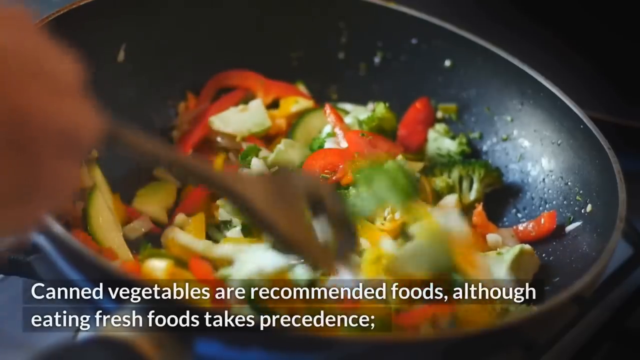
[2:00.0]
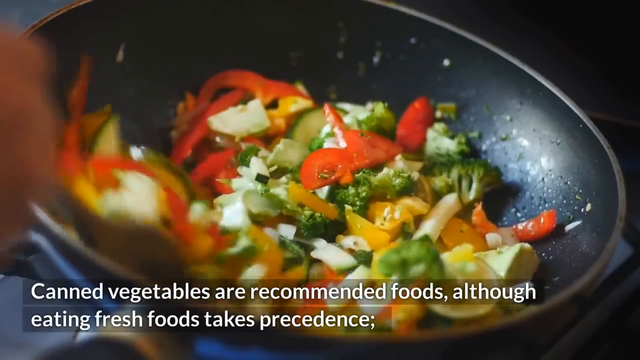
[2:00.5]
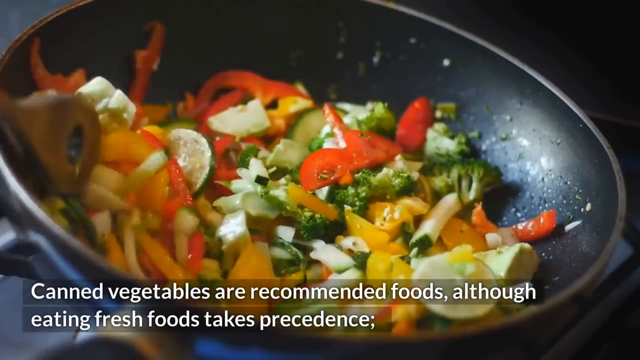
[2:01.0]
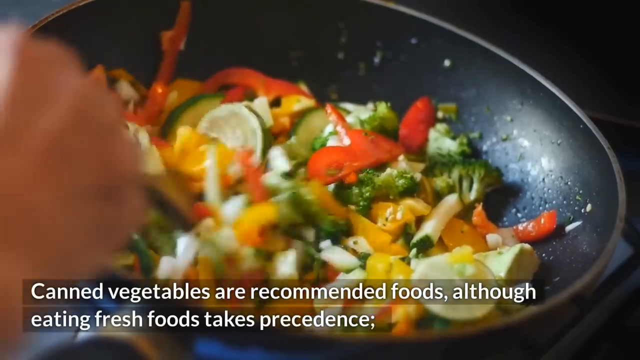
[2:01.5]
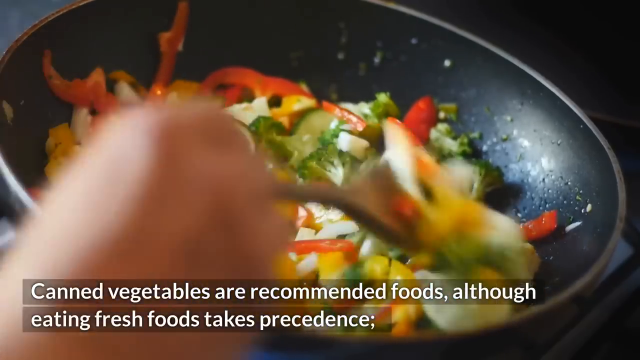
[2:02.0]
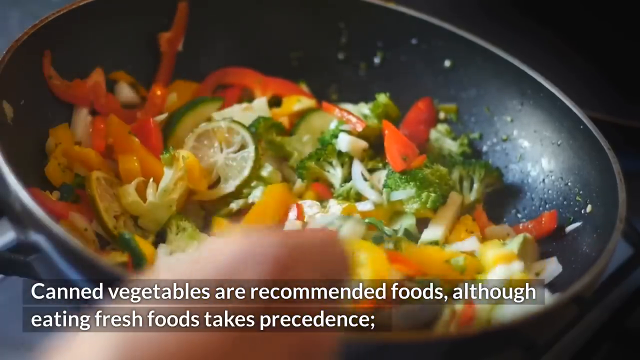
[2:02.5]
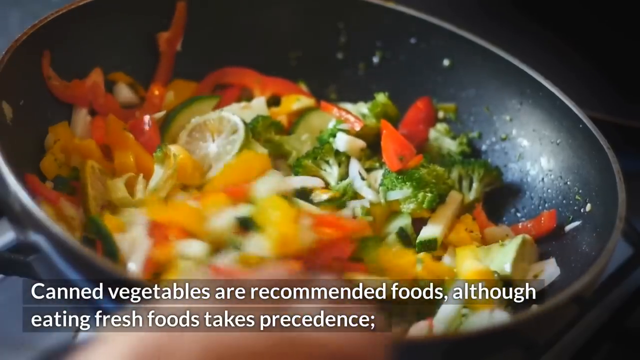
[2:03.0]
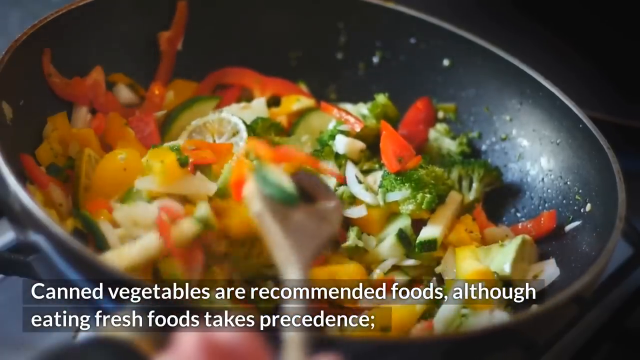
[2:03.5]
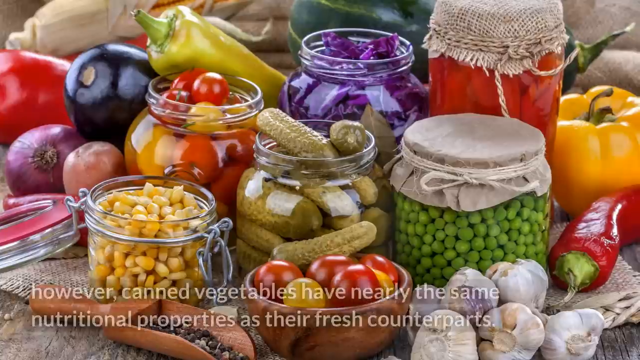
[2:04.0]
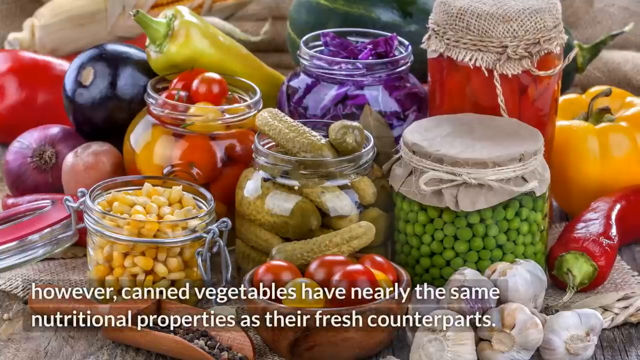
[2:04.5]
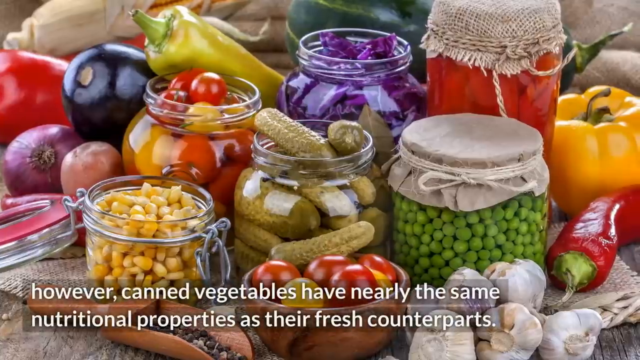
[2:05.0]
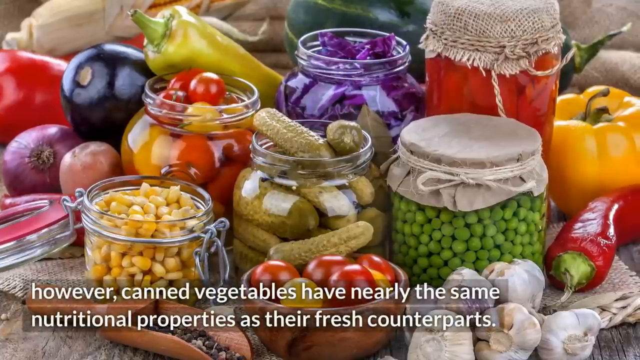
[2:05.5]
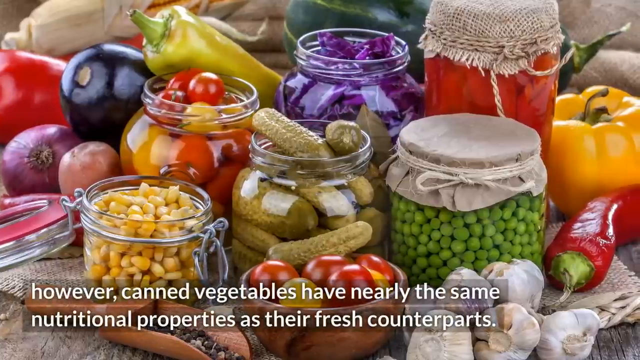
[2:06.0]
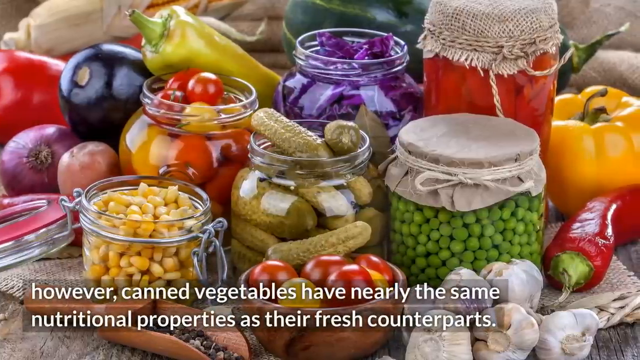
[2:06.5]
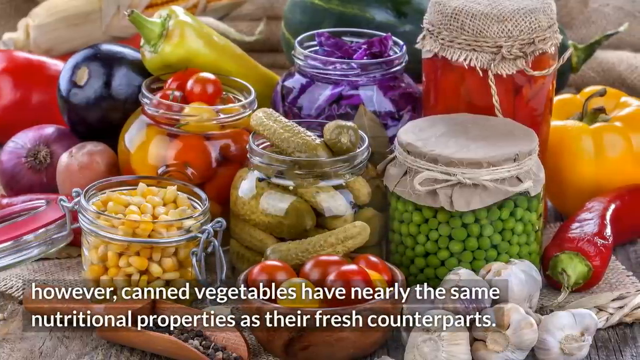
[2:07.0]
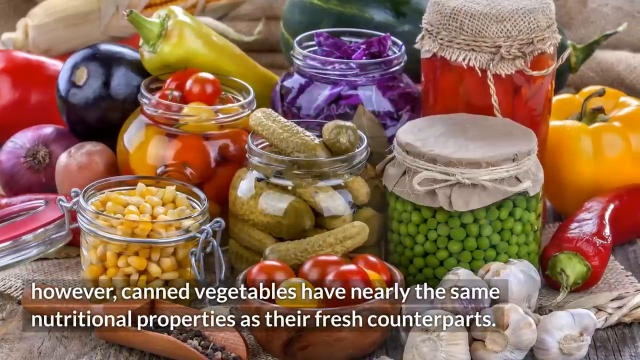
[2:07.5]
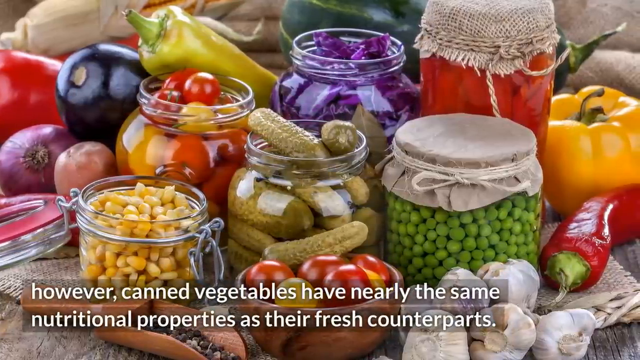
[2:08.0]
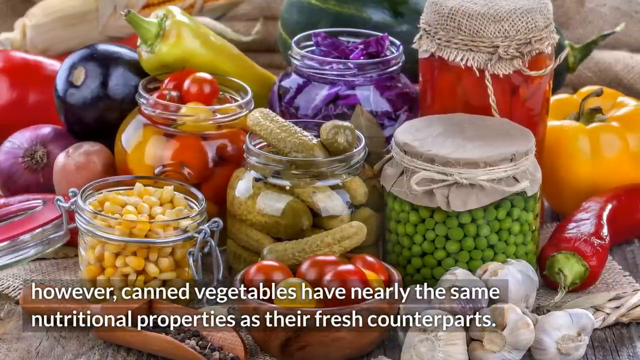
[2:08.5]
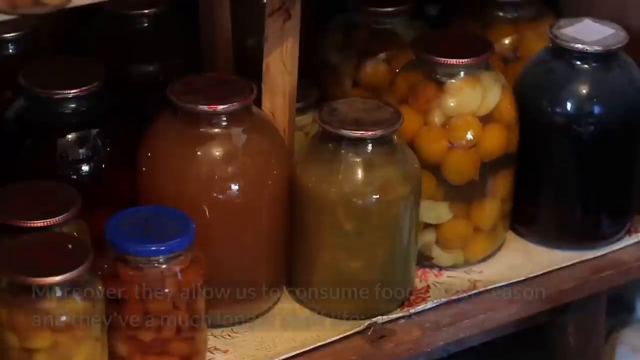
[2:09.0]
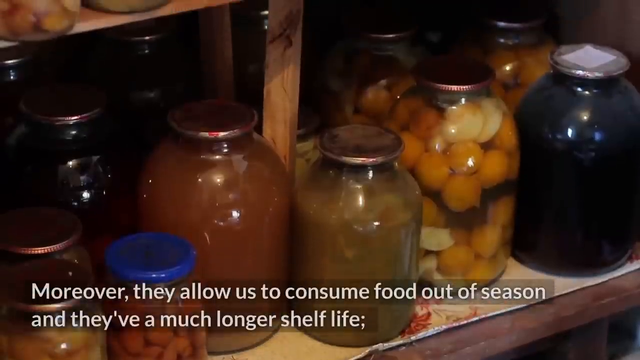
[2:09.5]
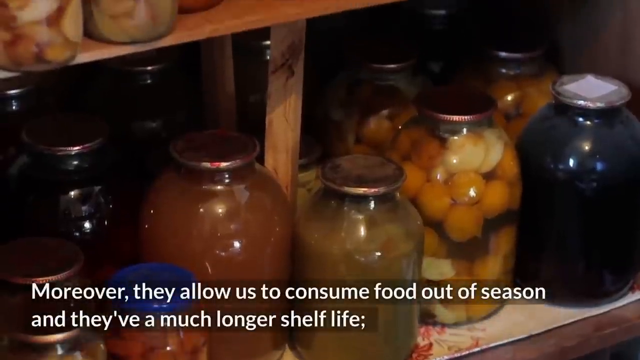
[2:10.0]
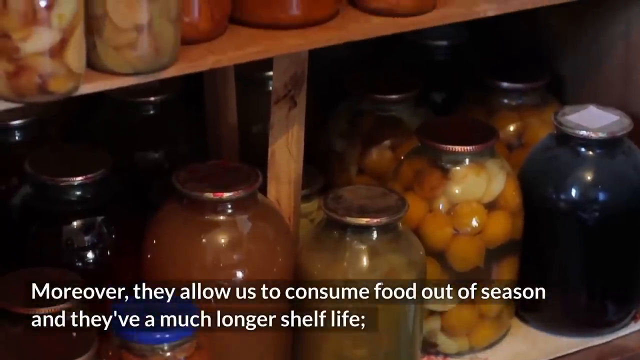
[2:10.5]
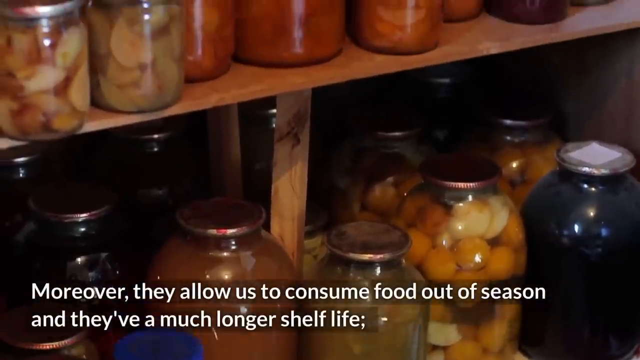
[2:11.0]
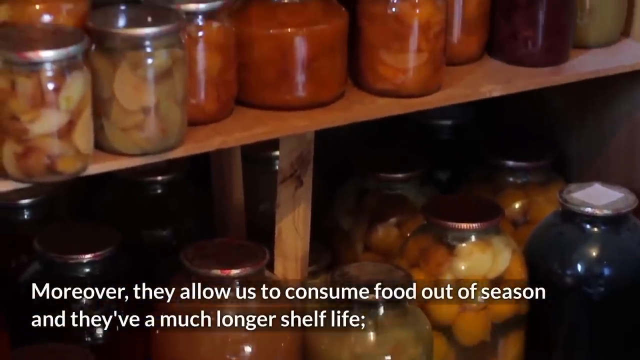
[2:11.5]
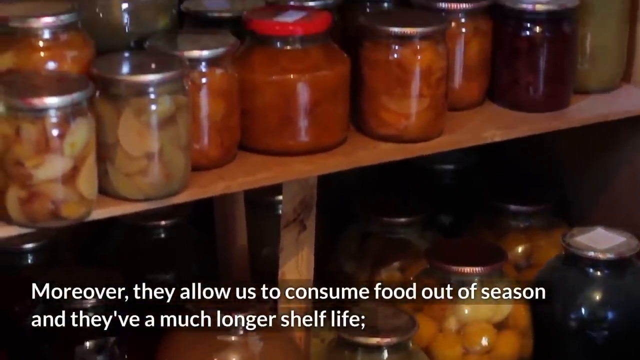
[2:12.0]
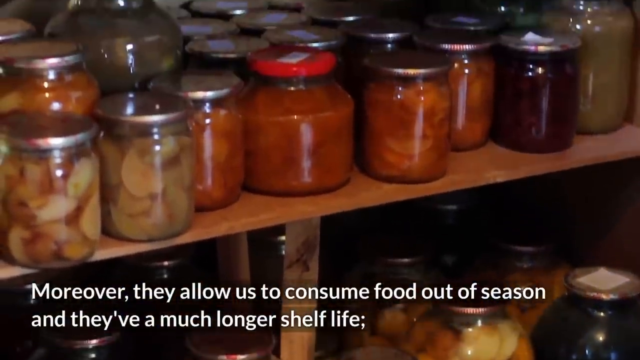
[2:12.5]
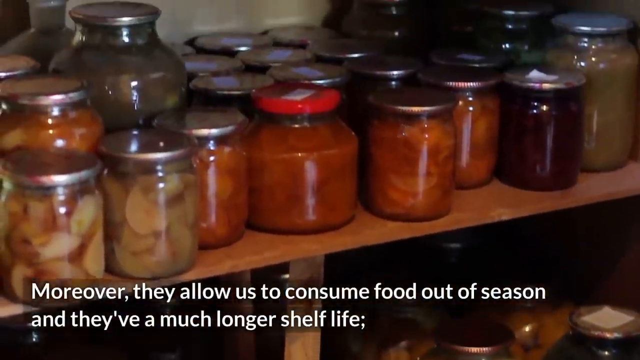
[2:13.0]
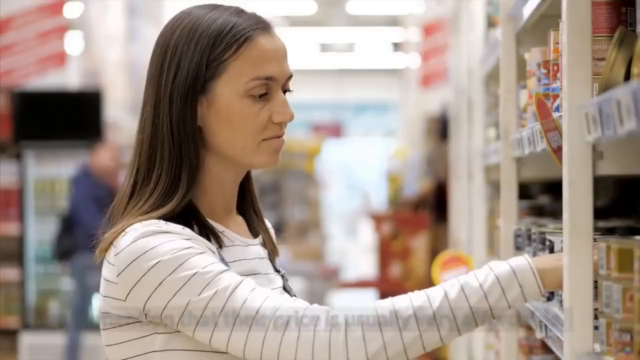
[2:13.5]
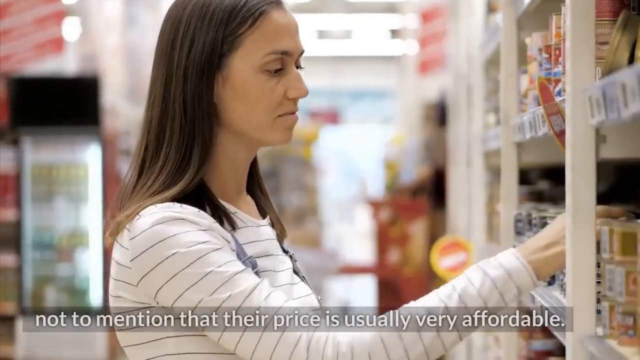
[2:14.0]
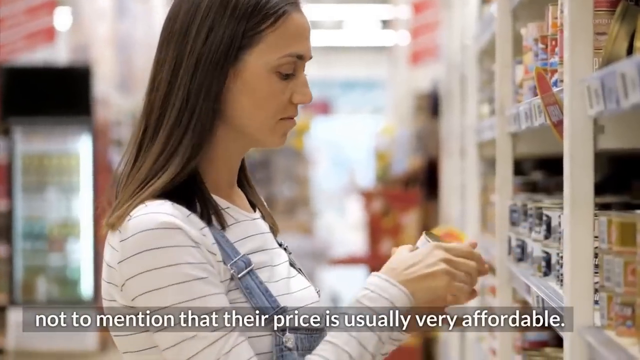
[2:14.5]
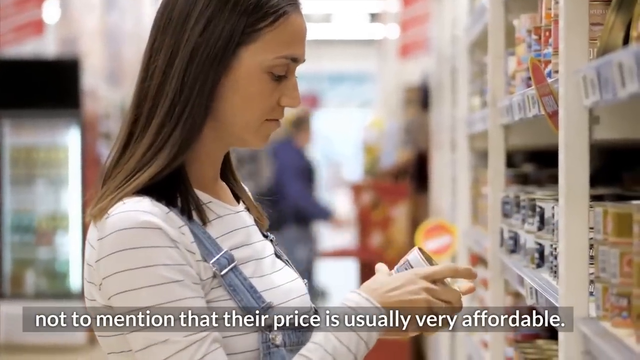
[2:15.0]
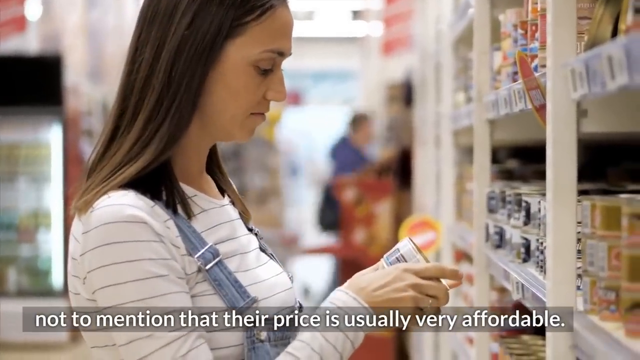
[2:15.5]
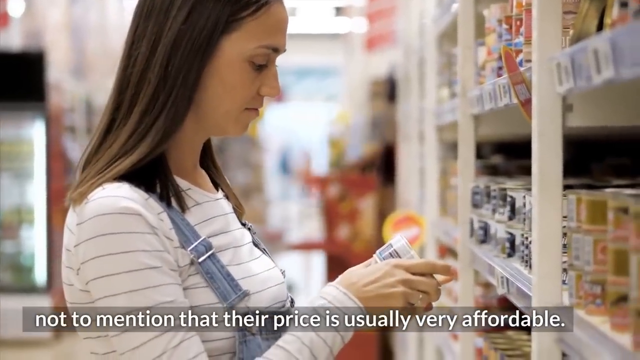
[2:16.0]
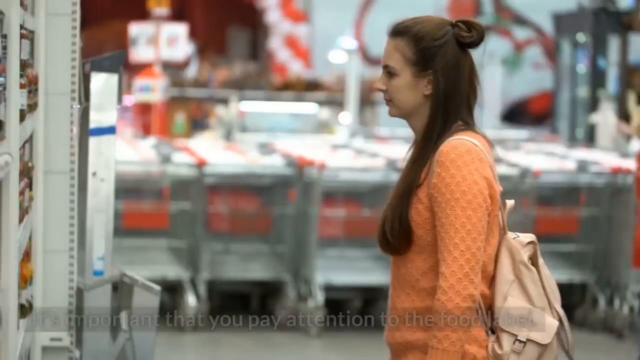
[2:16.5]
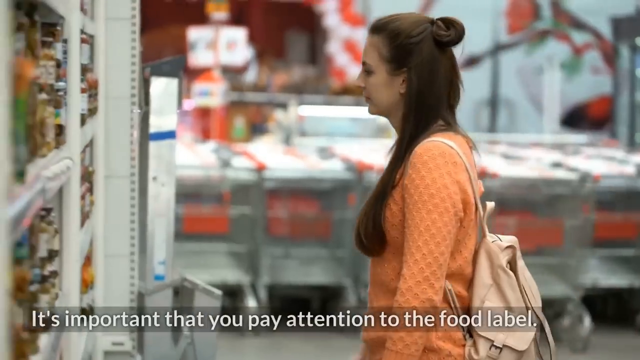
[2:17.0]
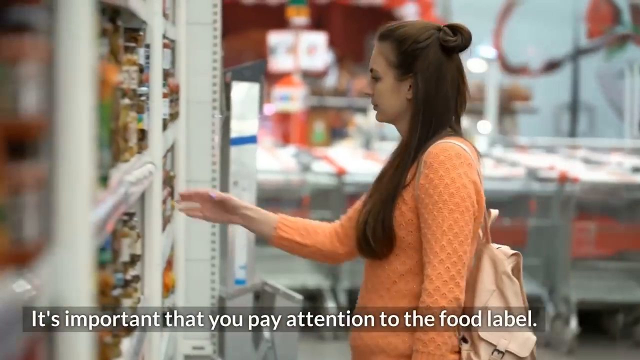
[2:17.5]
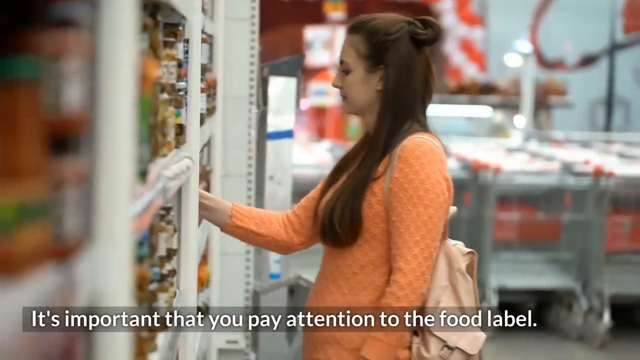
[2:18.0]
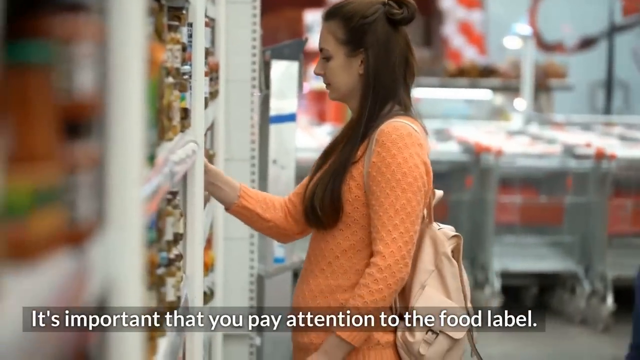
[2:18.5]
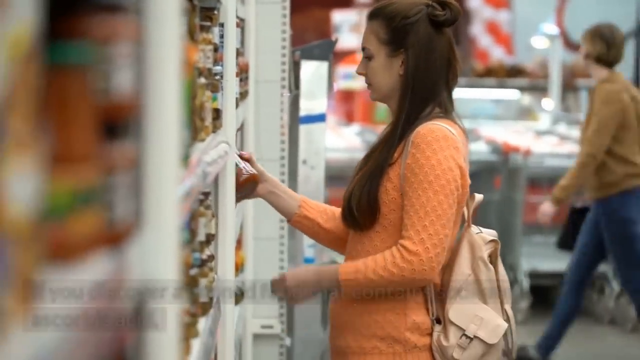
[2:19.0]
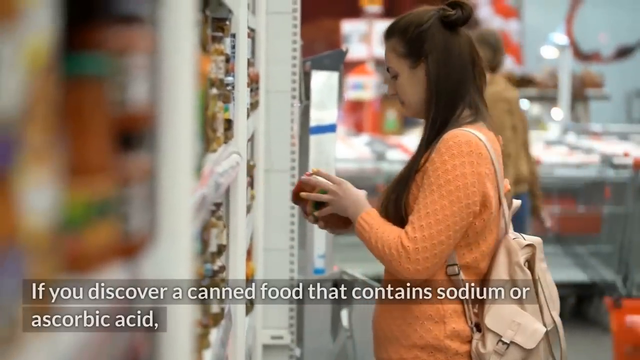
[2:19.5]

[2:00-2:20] A very colorful picture shows six jars and one small bowl of various vegetables and foods: a jar of green peas, a jar of corn, a jar of cabbage, a jar of pickles, a jar of tomatoes, and a sixth jar of some type of red substance. There is also a bowl of tomatoes, with various vegetables surrounding the rest, plus a scoop and garlic. The next shot shows multiple jars of food on a brown shelf. Then a woman looks at jars of food on a store shelf, followed by a different woman also looking at jars of food on a store shelf. This last woman wears an orange shirt and a backpack, and somebody walks behind her in the store.